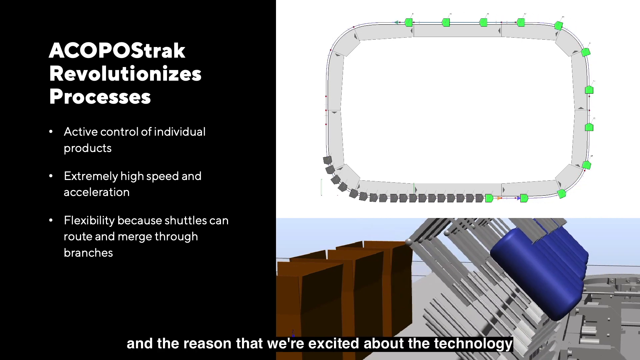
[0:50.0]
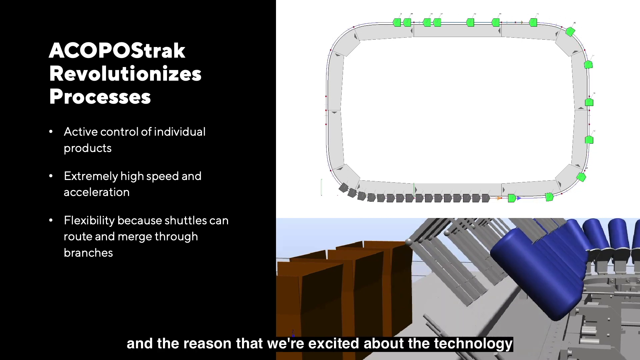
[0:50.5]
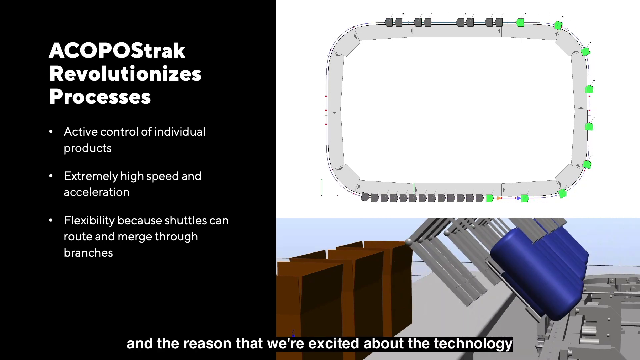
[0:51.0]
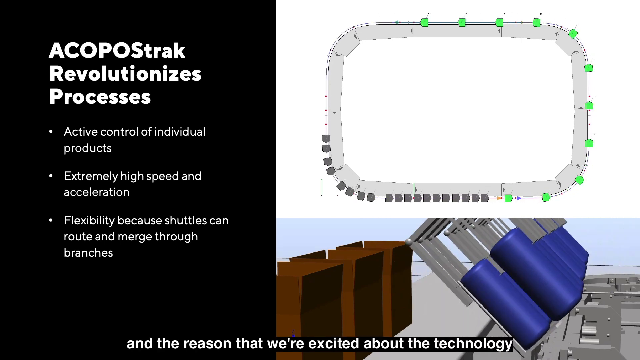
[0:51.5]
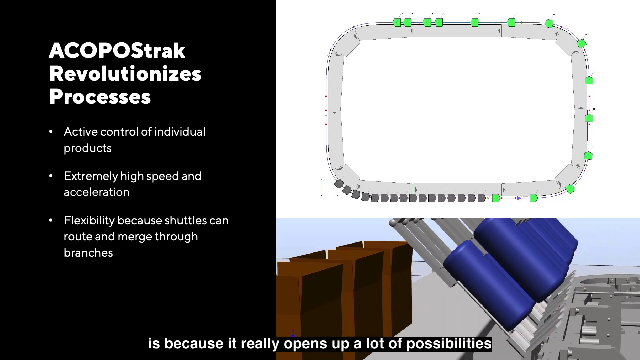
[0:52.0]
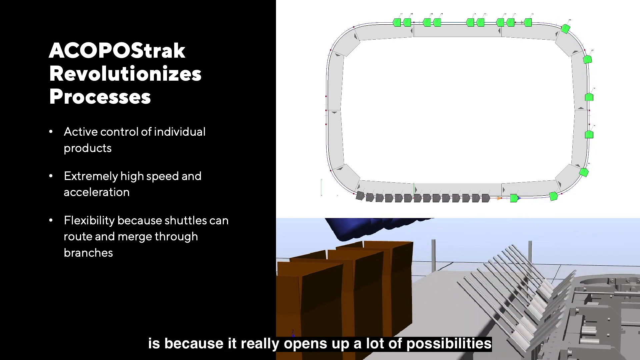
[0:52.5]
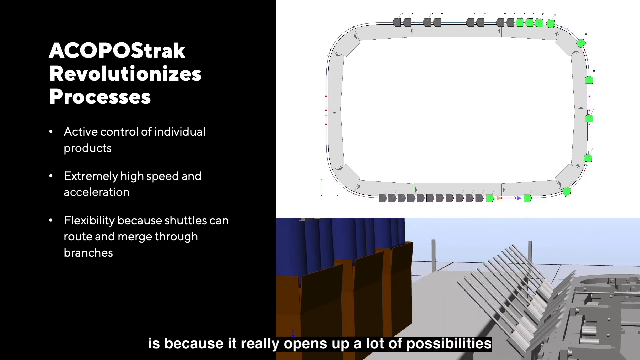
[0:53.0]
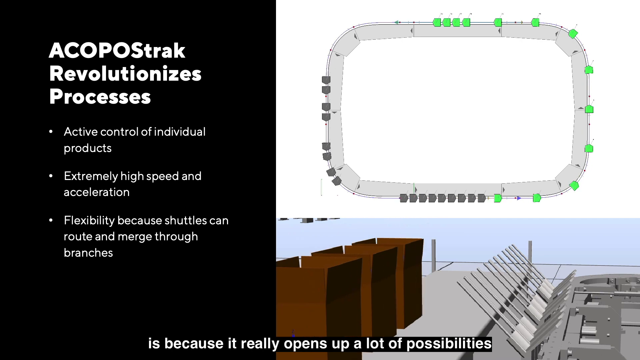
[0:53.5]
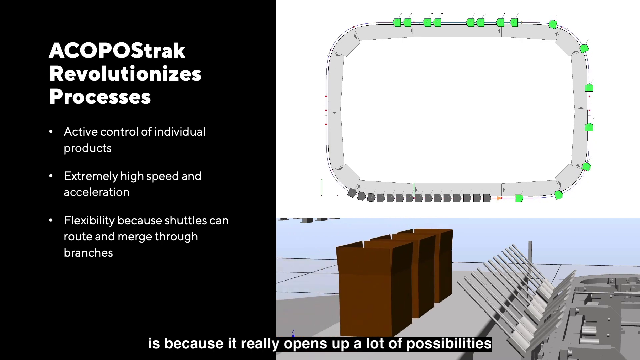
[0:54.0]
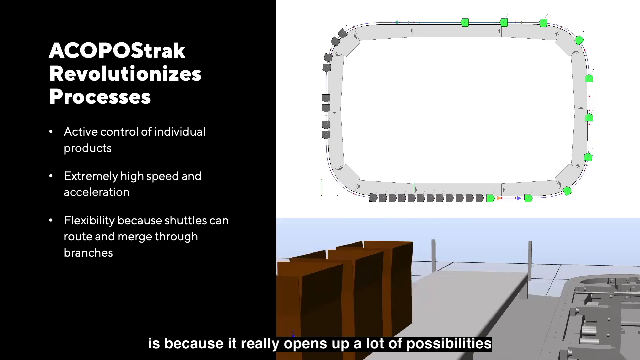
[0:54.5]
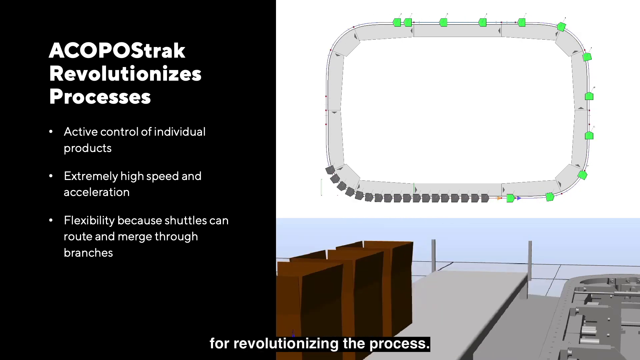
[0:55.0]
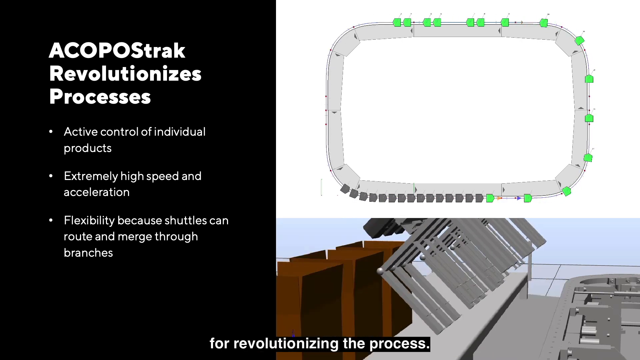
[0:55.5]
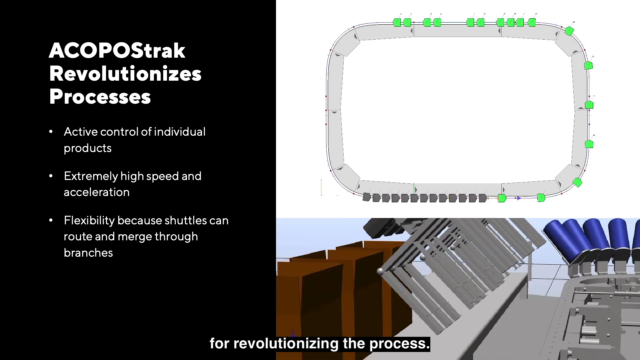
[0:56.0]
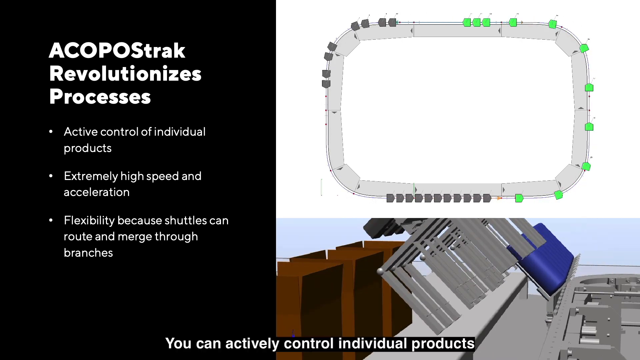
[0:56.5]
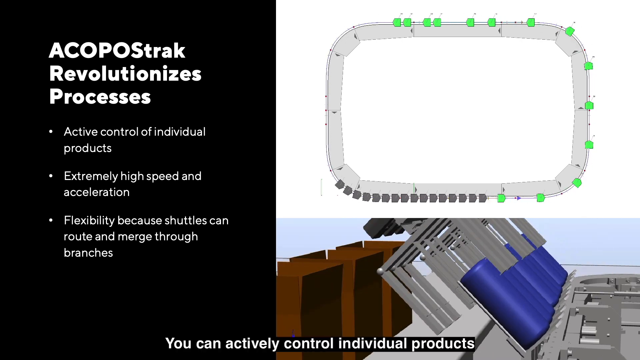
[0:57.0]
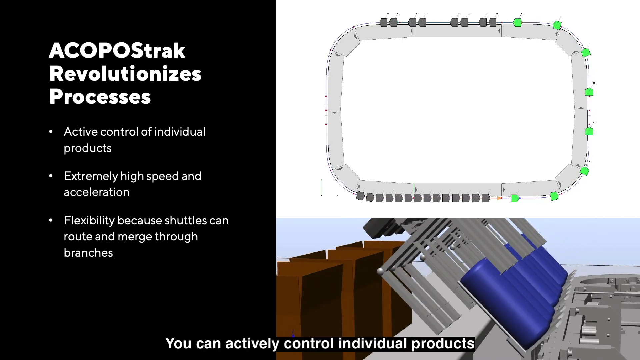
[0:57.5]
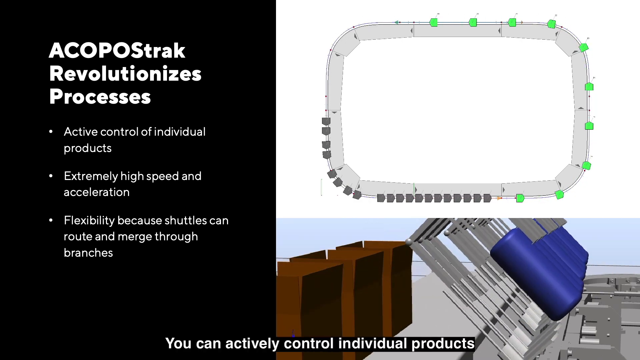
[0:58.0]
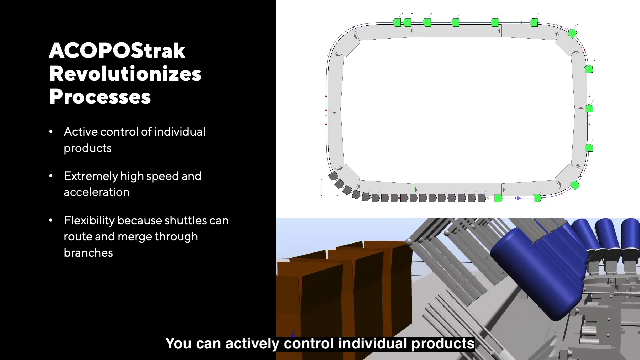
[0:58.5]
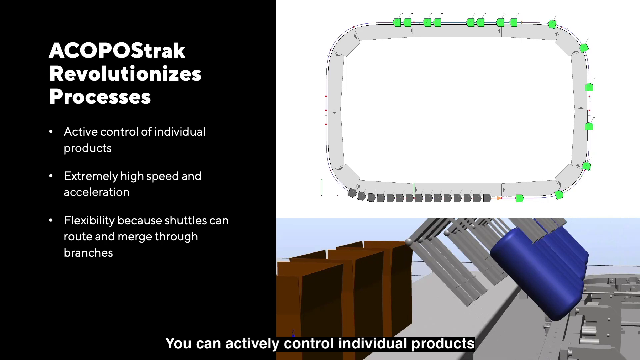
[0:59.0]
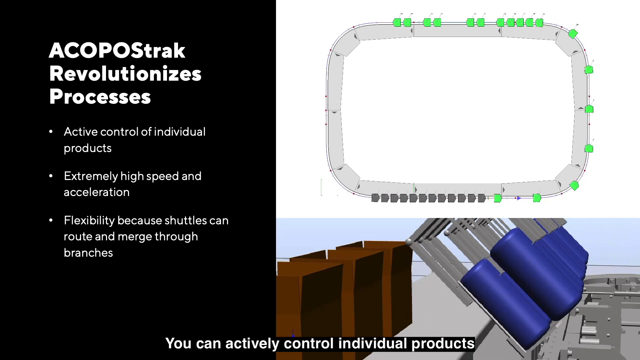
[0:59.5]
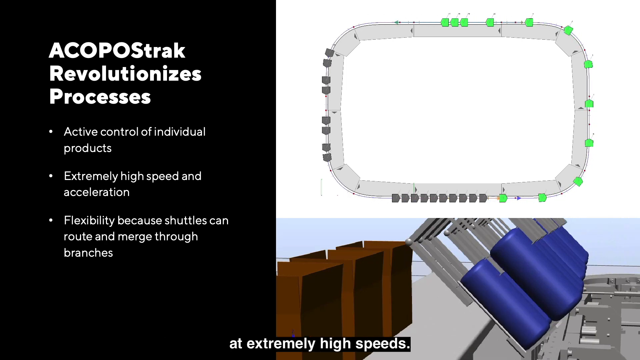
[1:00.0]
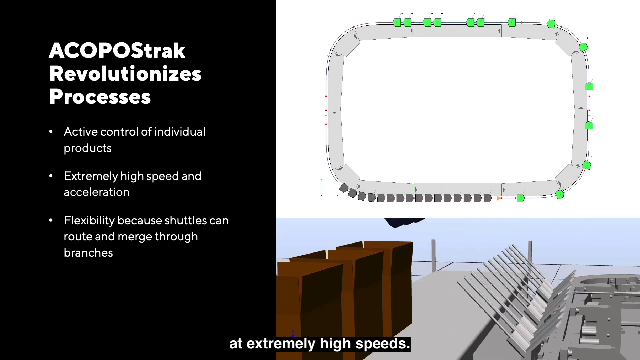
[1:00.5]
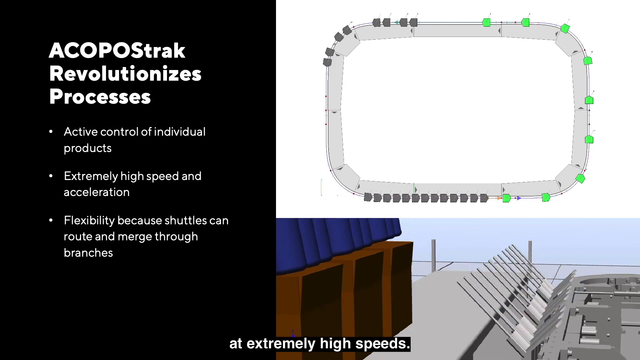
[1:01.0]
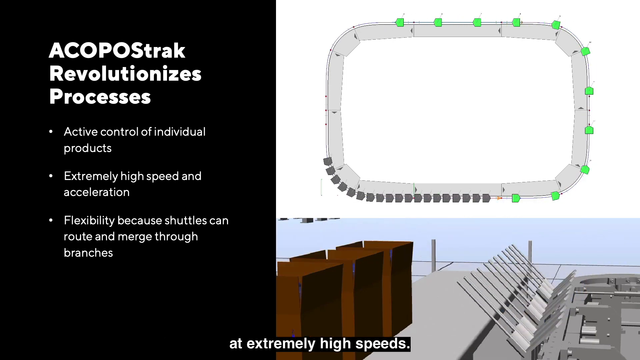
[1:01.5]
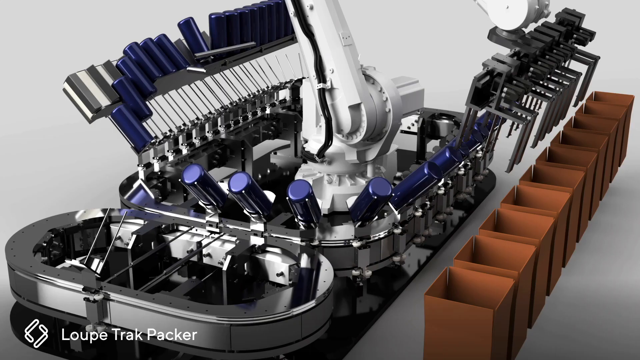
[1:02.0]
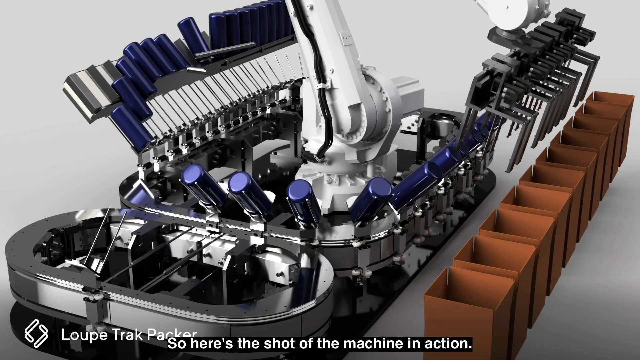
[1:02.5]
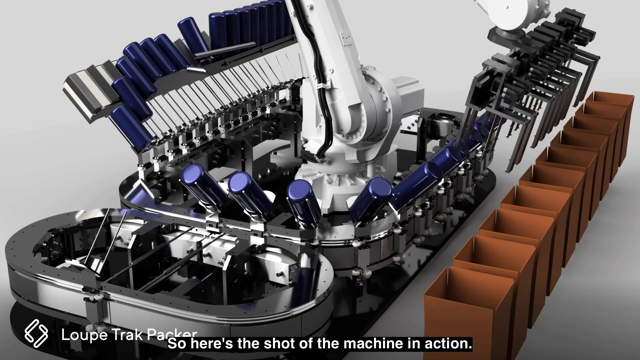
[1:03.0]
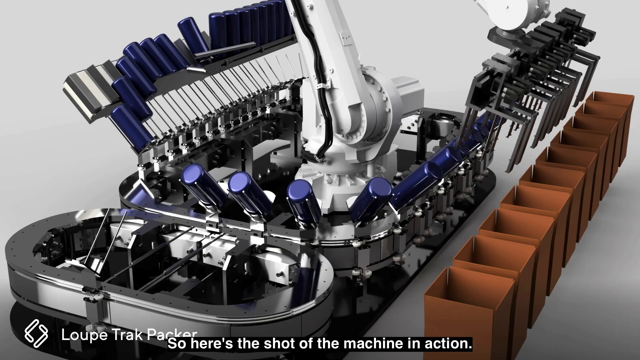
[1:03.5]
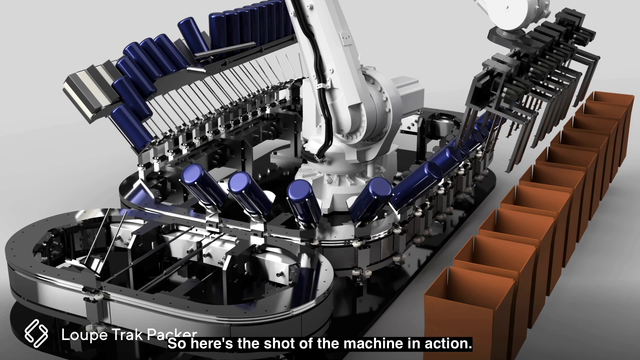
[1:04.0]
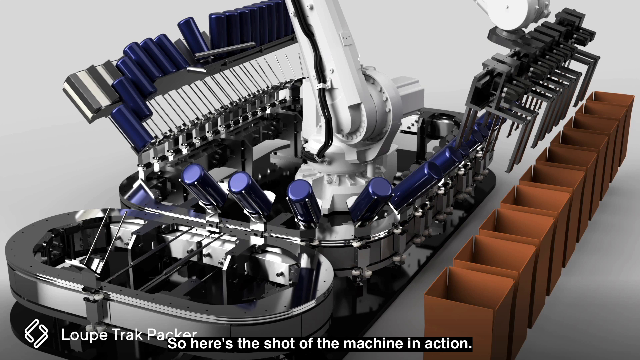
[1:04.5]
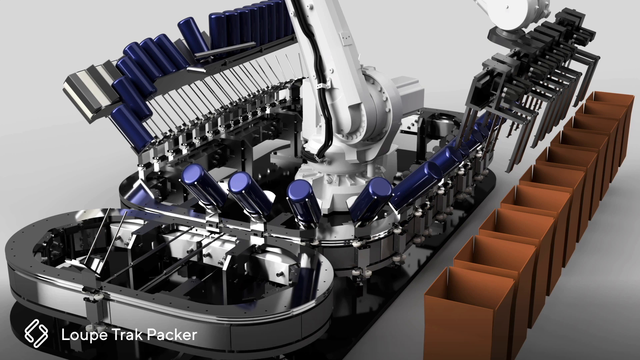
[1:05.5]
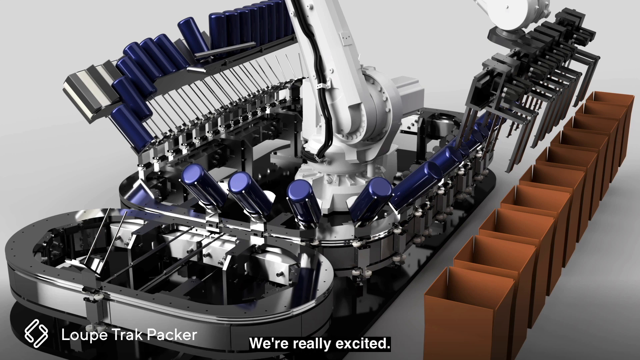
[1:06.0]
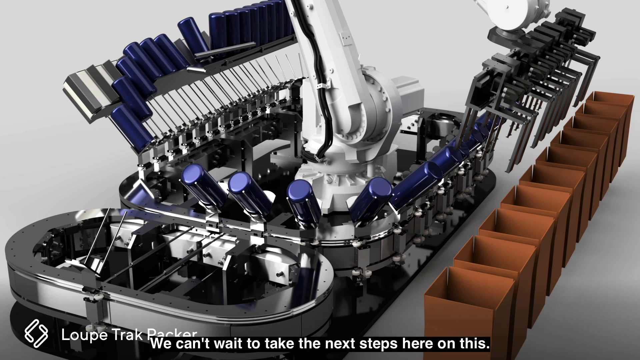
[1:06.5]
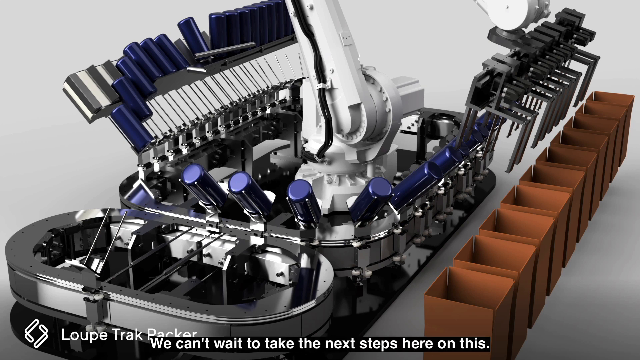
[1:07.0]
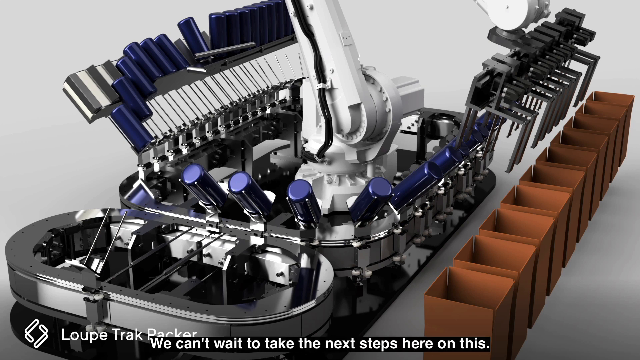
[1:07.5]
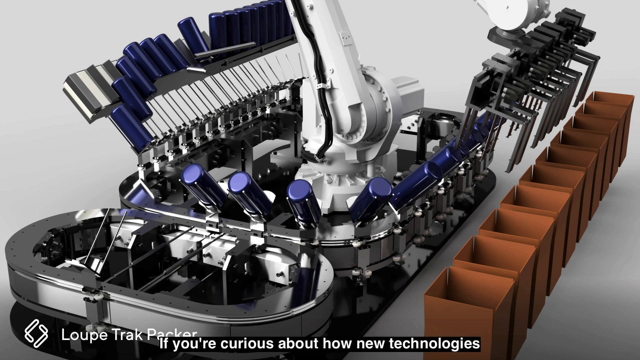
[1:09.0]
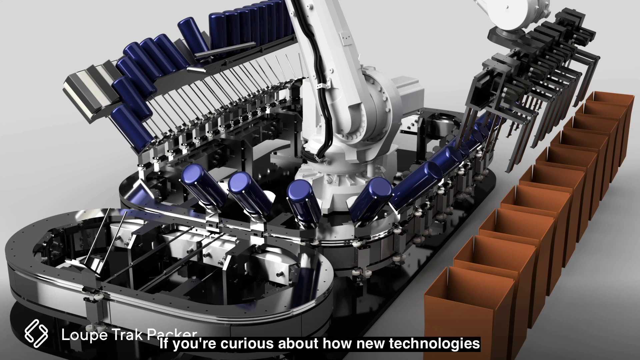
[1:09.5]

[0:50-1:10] A rendering shows the cylinders going around inside the machine, and next to it is the text "Active control of individual products, extremely high speed and acceleration, flexibility because shuttles can route and merge through branches." The cylinders are fed into the machine and go around. A closer rendering of the machine follows, showing all the cylinders inside, with the blue ones in use. Subtitles appear as the advertiser speaks about seeing the product in action and being excited about it.